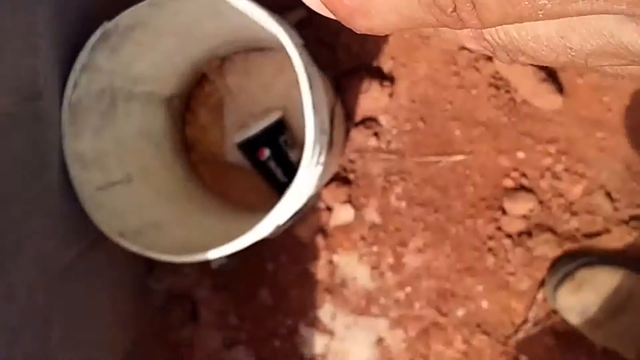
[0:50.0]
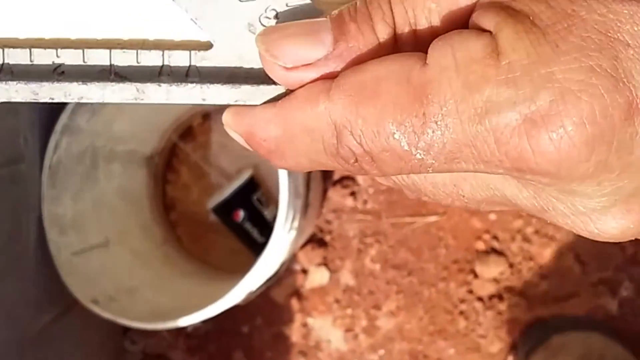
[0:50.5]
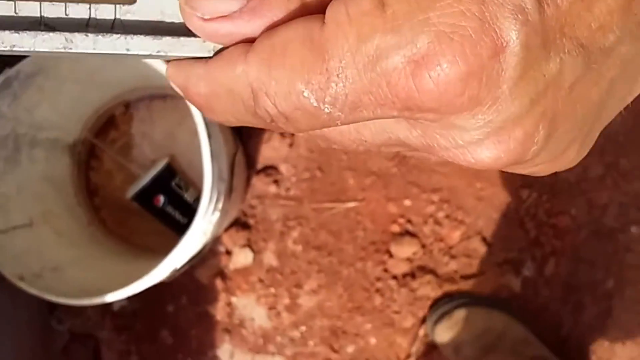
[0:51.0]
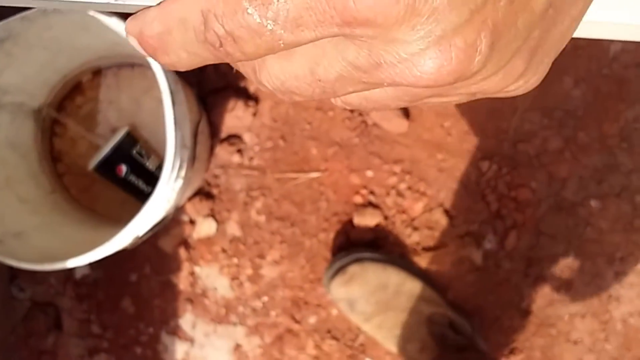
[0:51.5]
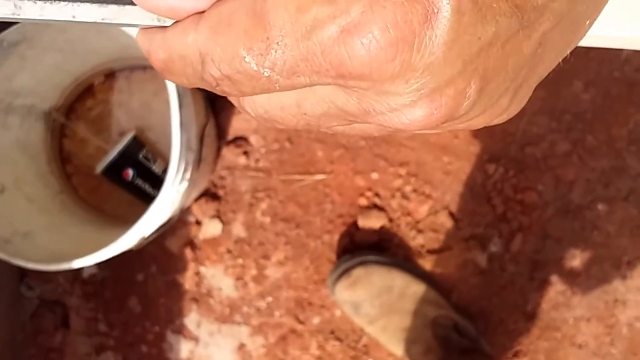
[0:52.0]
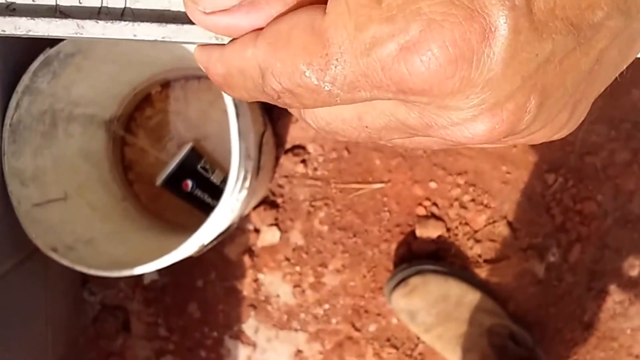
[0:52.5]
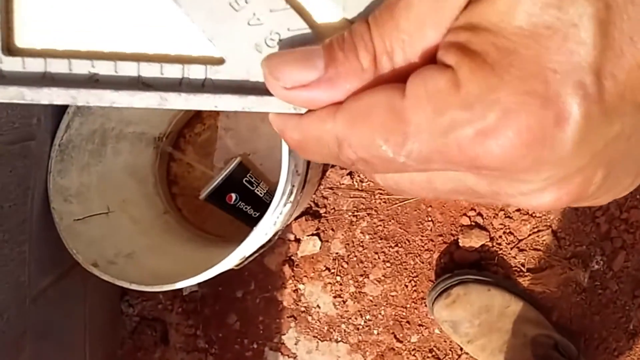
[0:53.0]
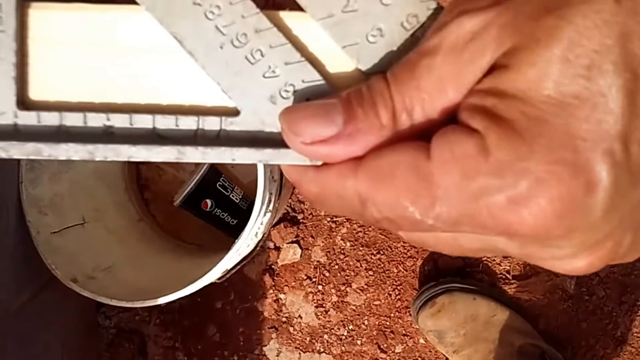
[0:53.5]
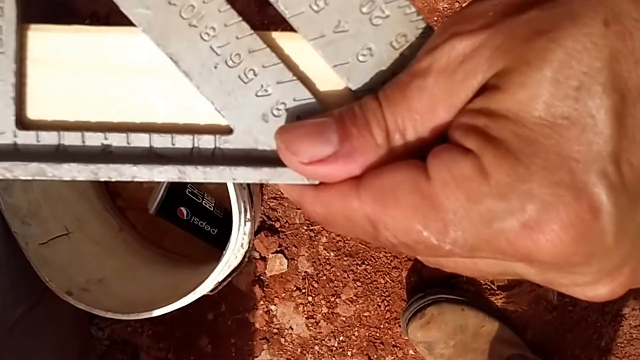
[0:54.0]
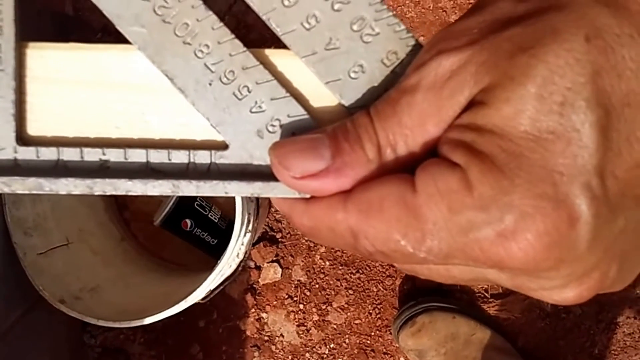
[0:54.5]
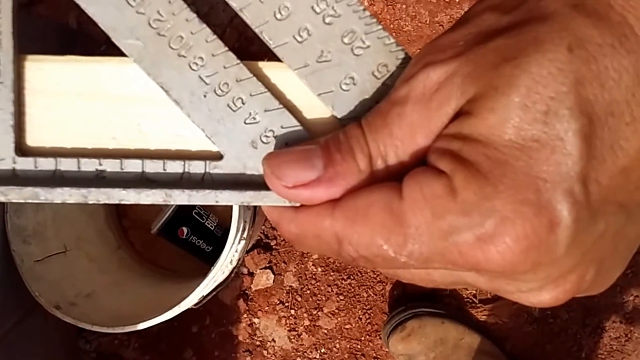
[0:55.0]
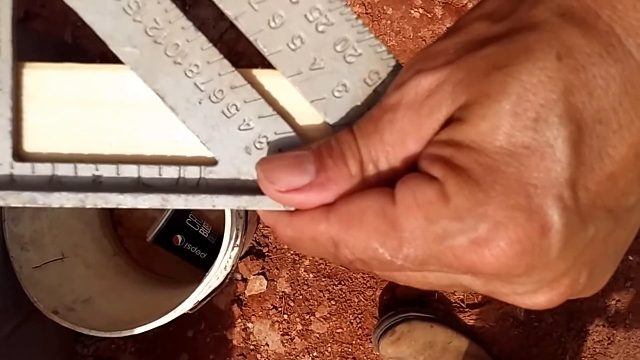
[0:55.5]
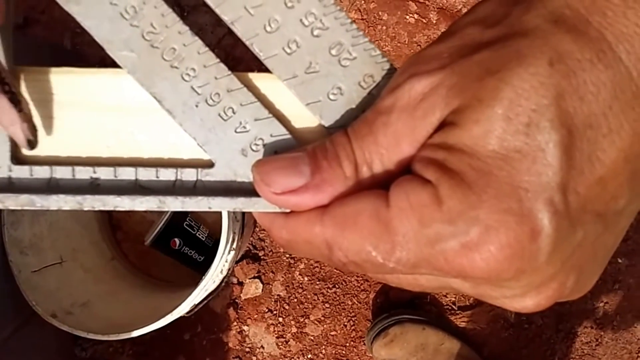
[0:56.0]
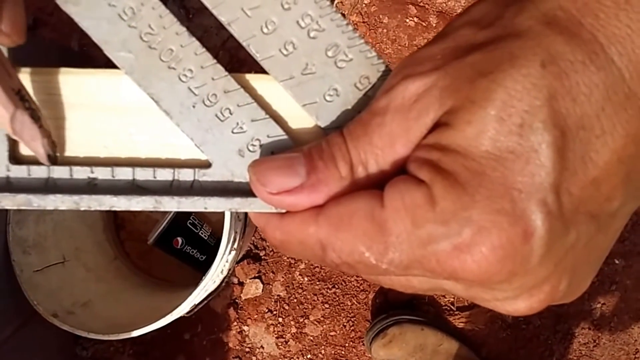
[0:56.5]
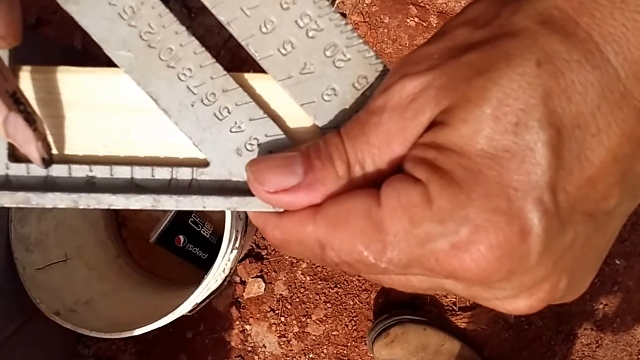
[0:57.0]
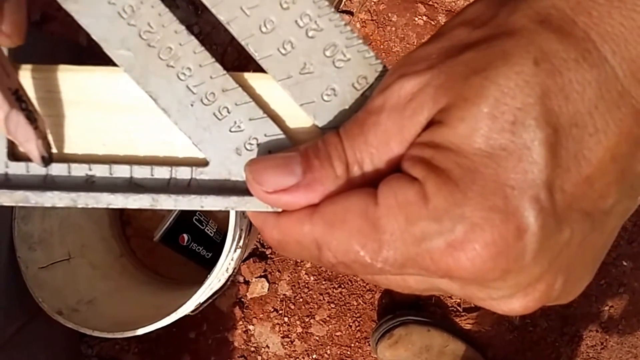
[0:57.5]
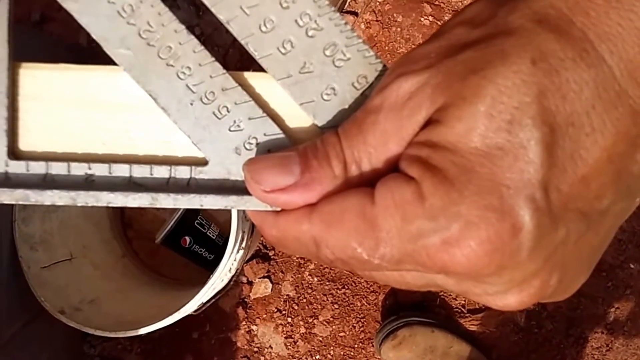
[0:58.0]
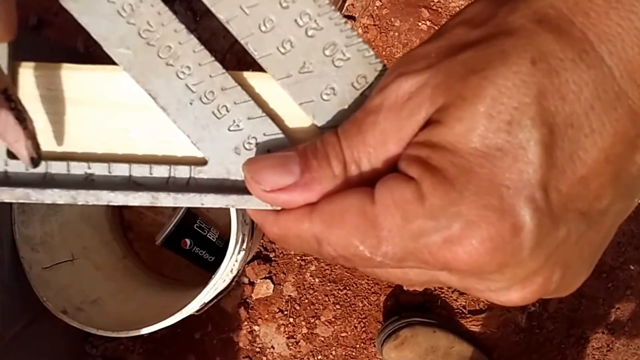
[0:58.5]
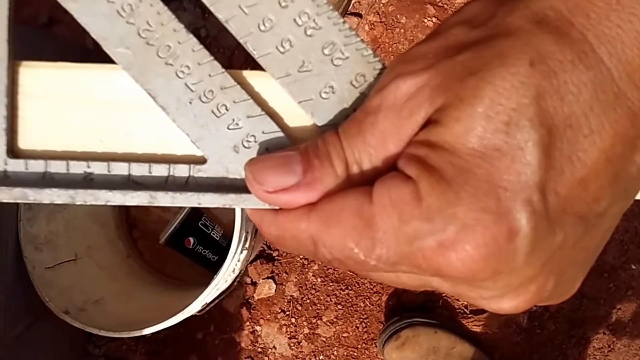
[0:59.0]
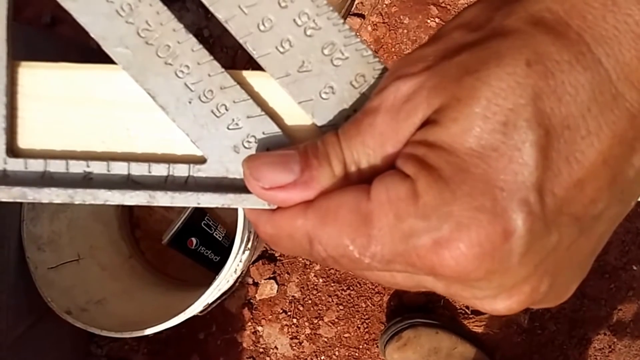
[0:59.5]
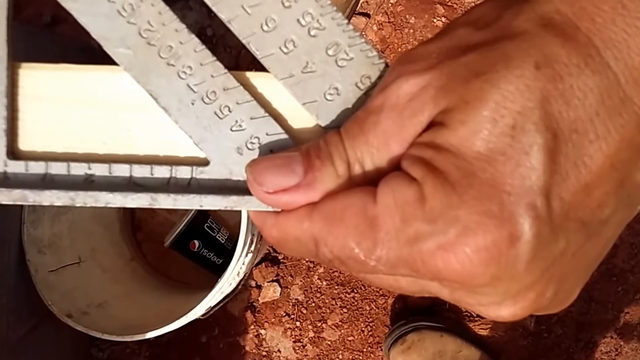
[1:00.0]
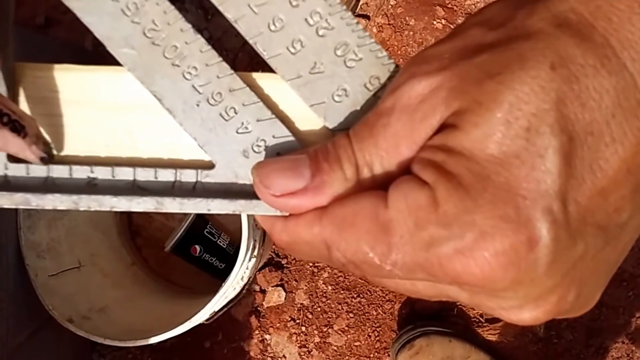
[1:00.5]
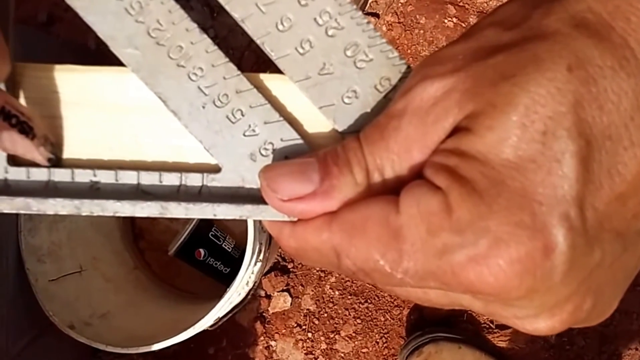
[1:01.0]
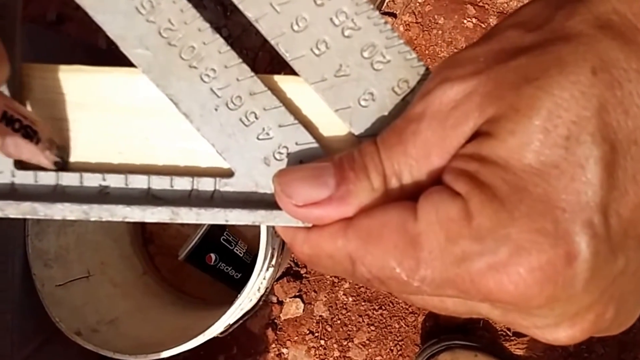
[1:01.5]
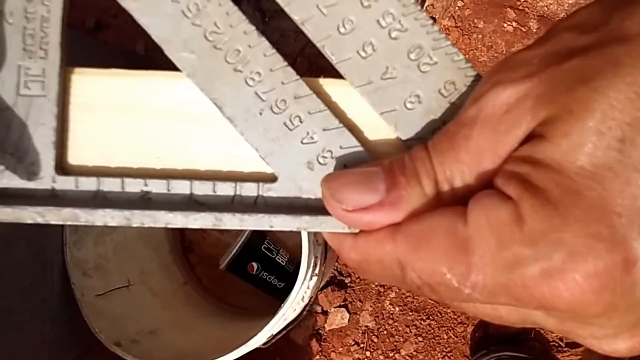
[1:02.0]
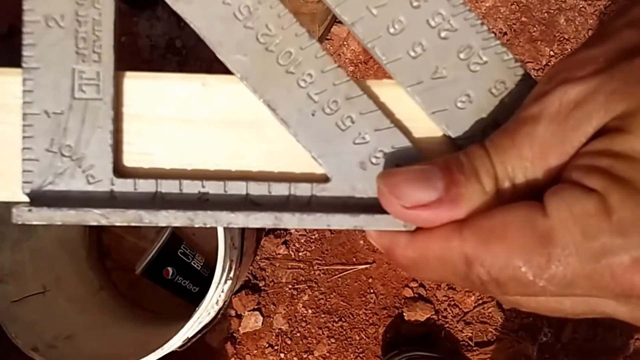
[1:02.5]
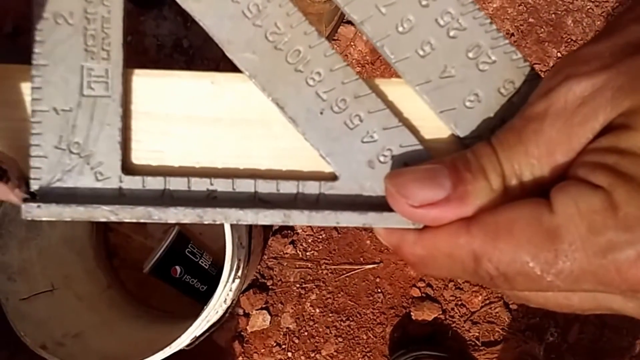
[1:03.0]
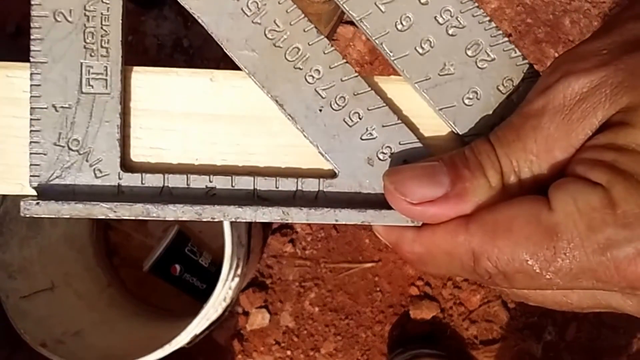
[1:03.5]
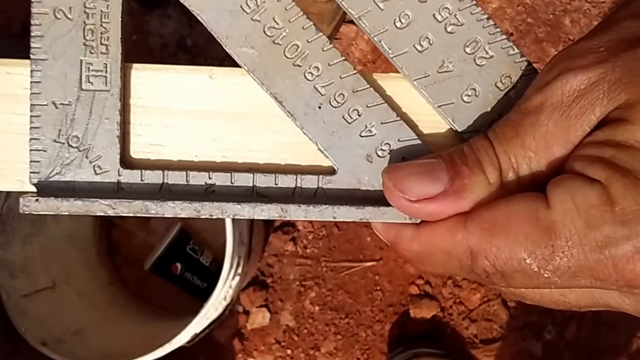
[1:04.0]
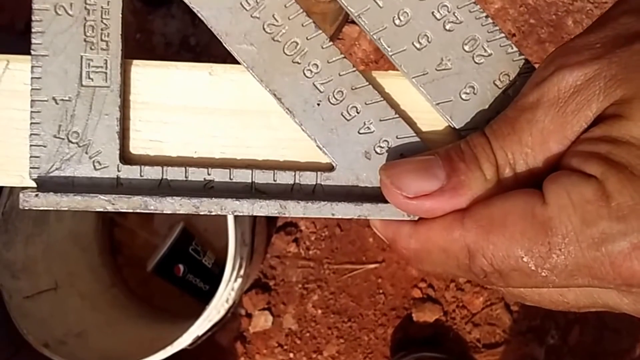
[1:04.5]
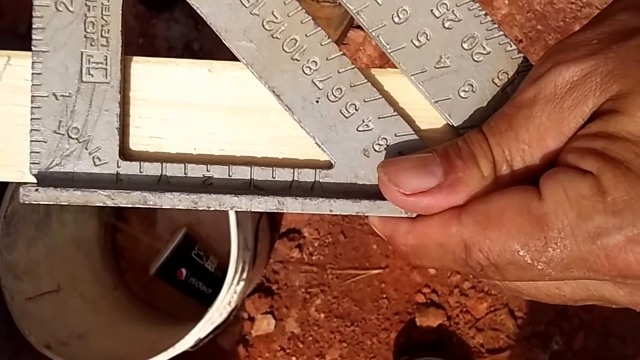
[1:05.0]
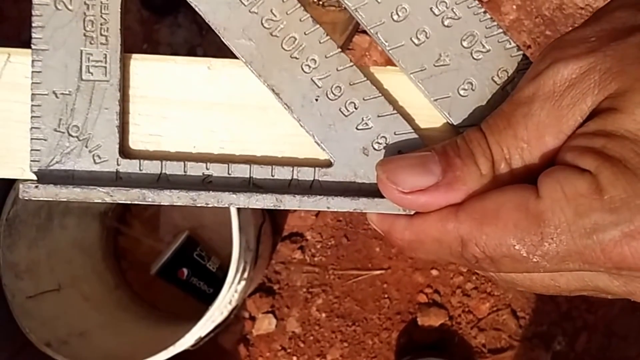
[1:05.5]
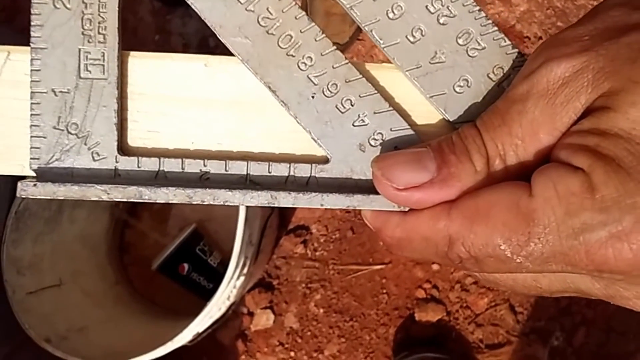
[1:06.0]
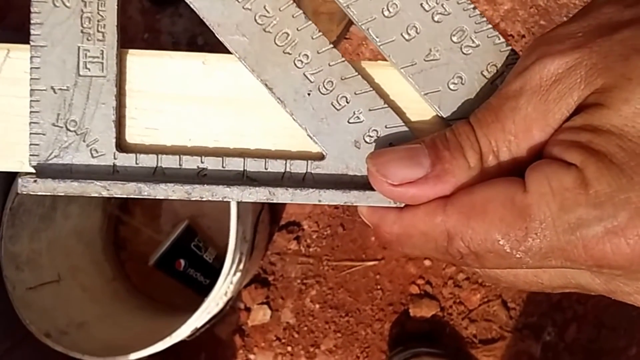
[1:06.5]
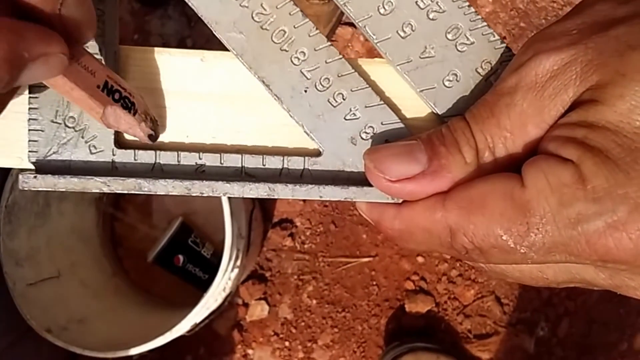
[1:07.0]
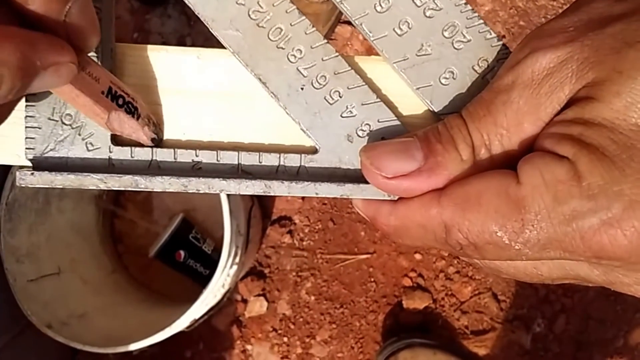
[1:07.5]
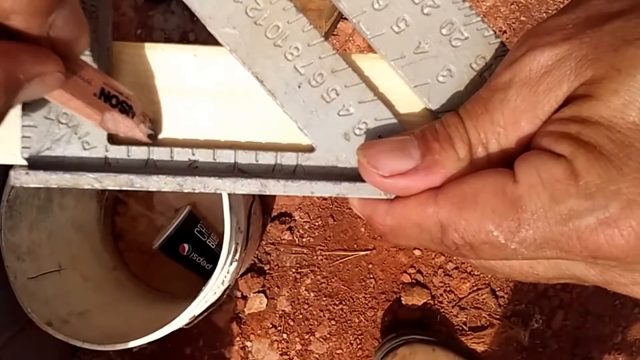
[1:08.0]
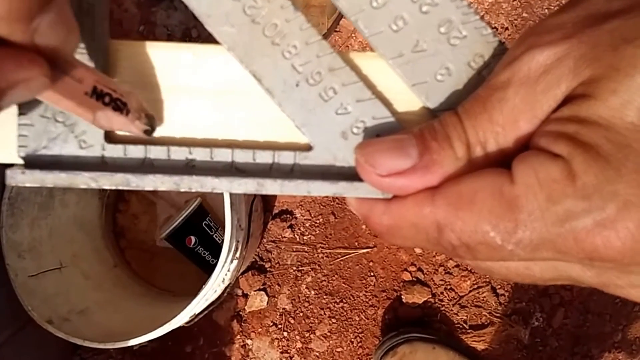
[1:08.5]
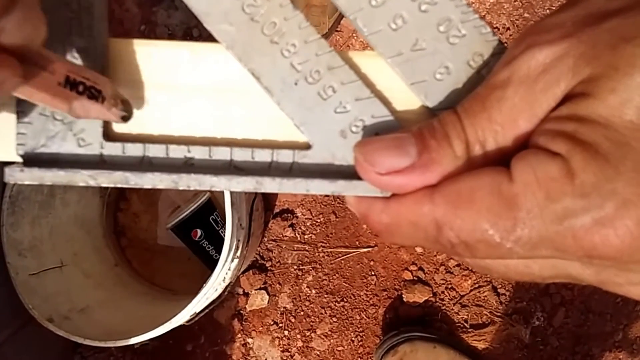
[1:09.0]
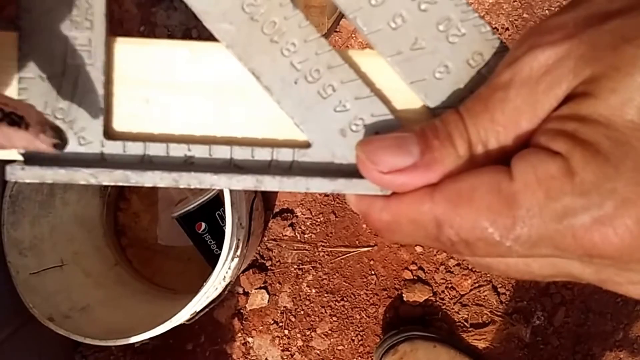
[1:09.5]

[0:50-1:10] A dirty white bucket is shown; inside, it is slightly filled with dirty brown water with grains of sand, and there is a cup of what looks like a coffee container. On the ground is red or brown gravel. A shoe of the man appears in the scene, with hands in the top right corner of the shot. The man holds the ruler steadily against the piece of wood and draws lines with what looks like a pencil, then moves the ruler and continues drawing lines on the wooden block.